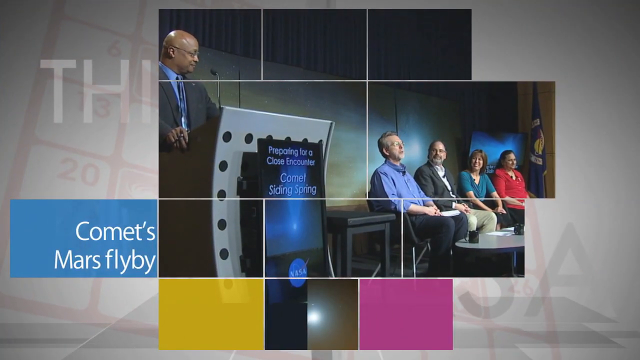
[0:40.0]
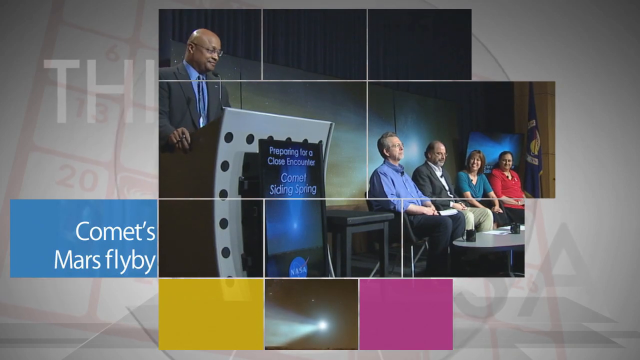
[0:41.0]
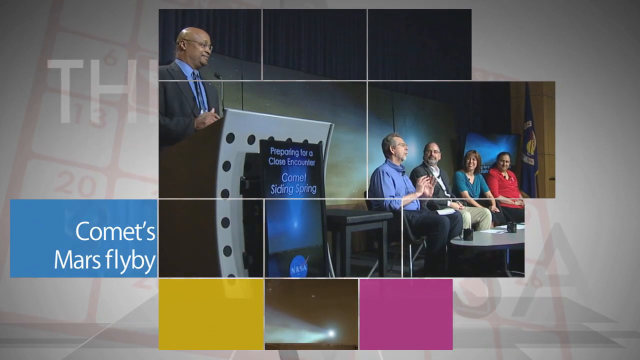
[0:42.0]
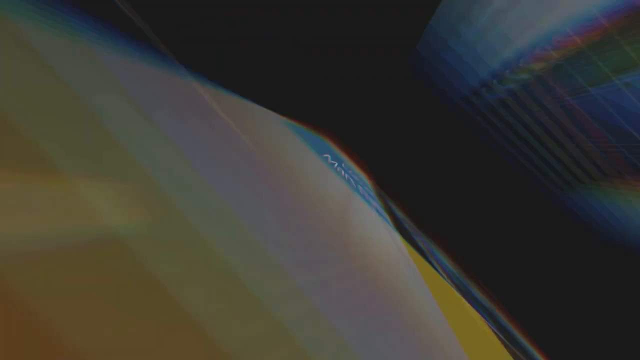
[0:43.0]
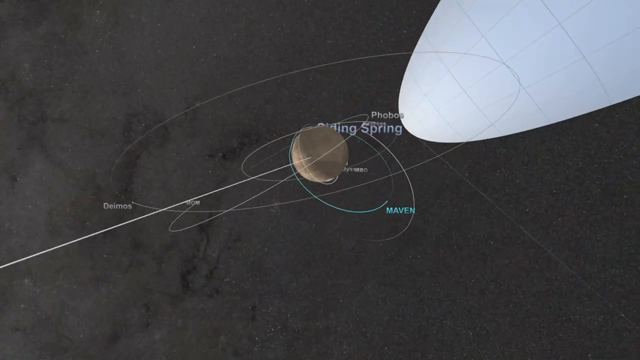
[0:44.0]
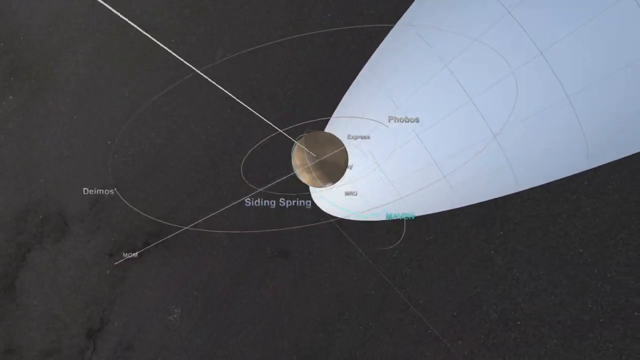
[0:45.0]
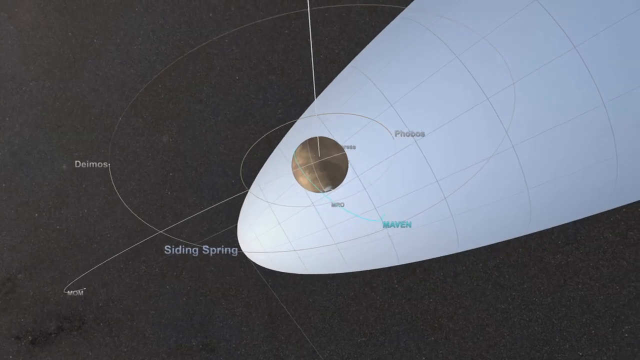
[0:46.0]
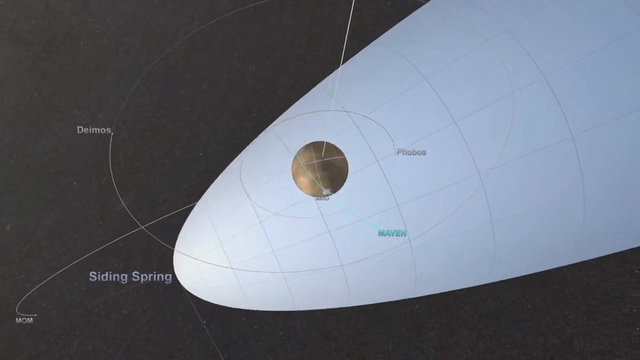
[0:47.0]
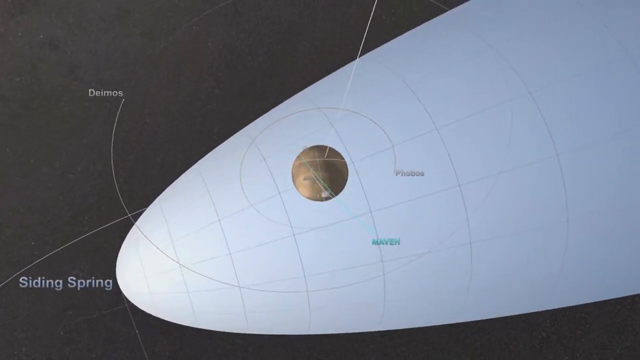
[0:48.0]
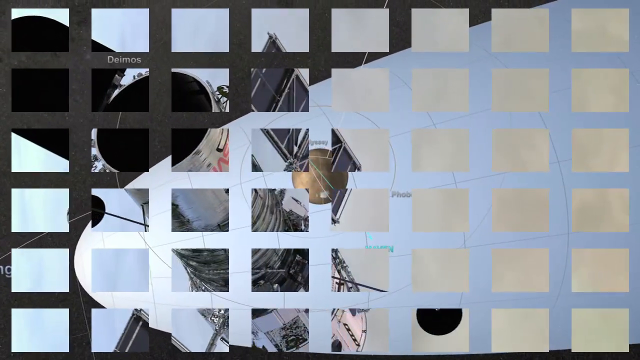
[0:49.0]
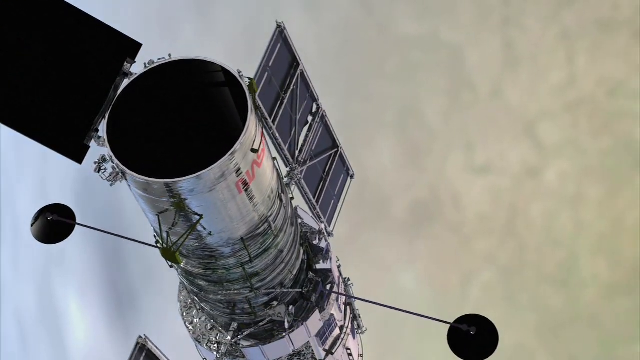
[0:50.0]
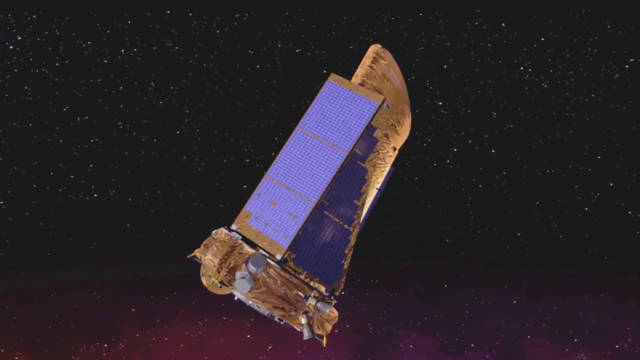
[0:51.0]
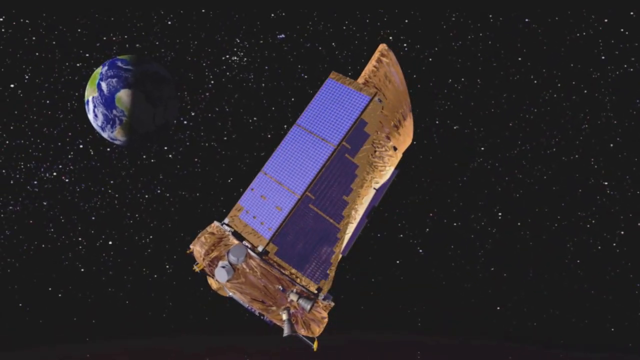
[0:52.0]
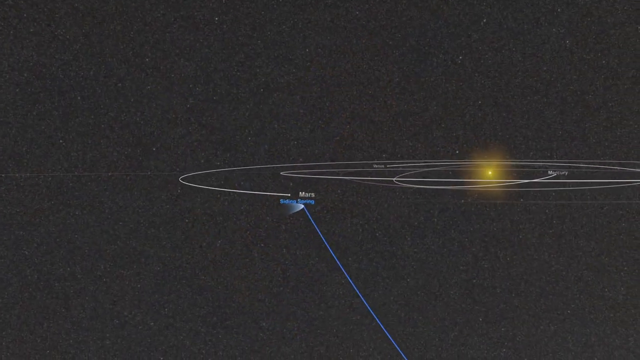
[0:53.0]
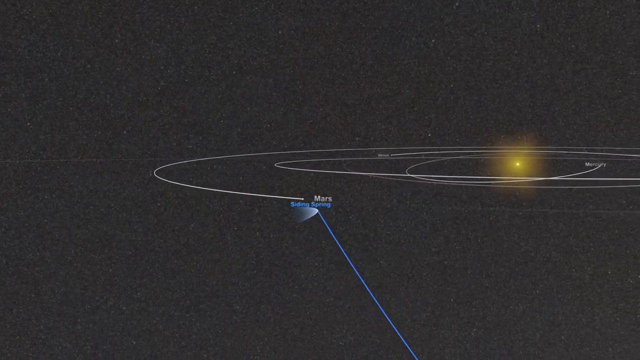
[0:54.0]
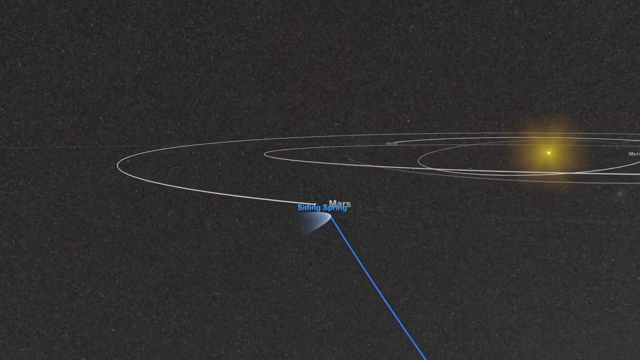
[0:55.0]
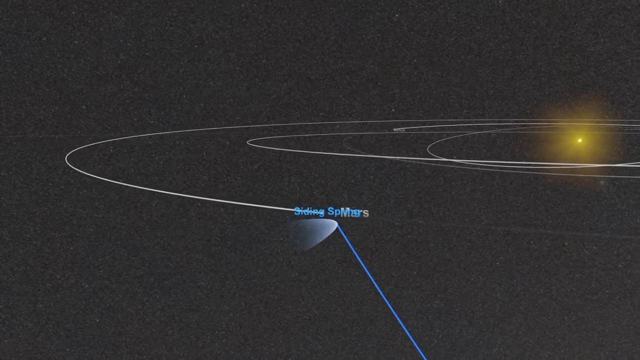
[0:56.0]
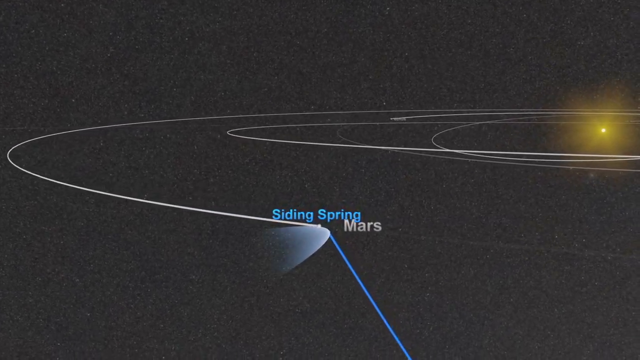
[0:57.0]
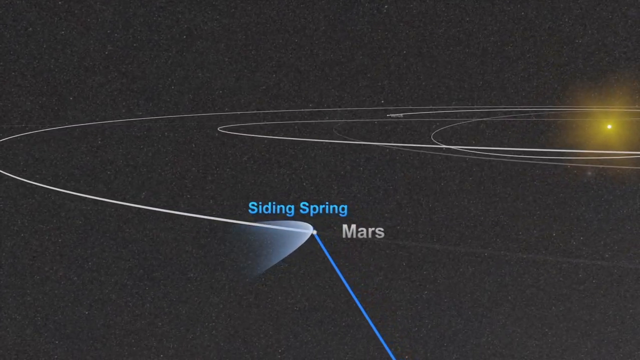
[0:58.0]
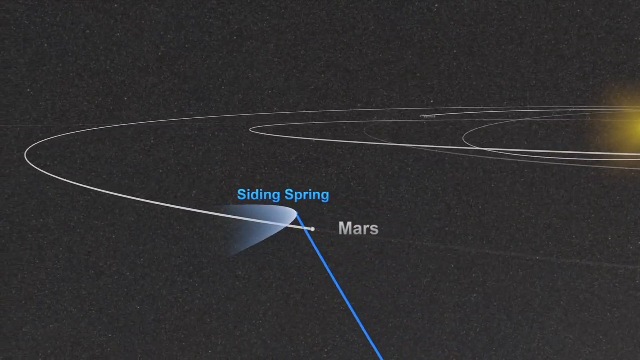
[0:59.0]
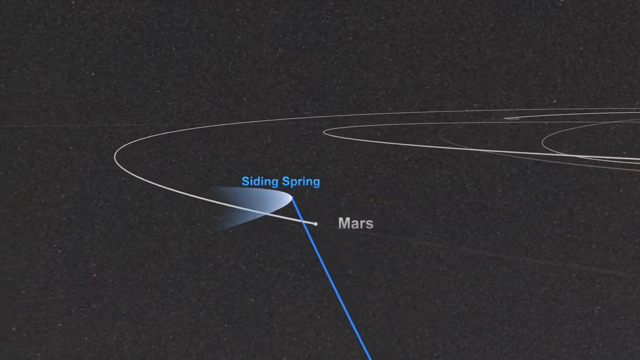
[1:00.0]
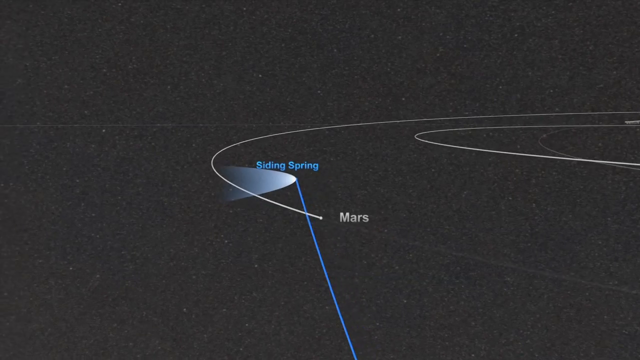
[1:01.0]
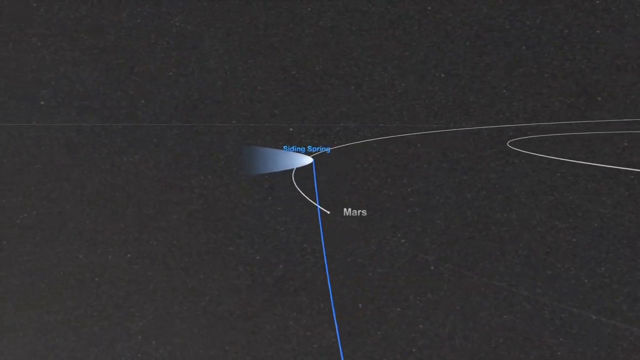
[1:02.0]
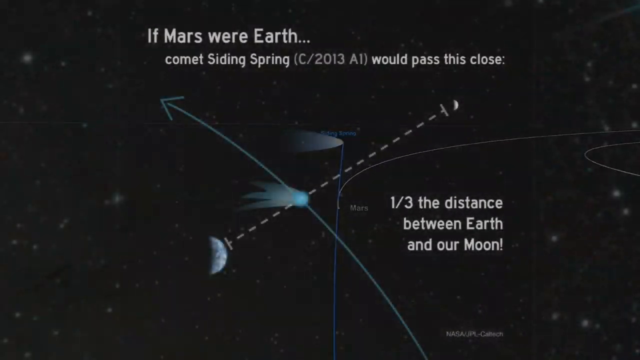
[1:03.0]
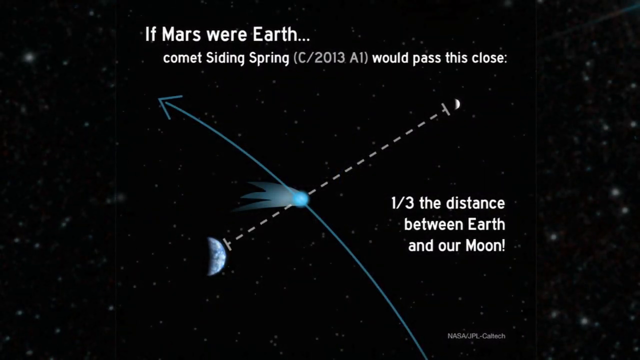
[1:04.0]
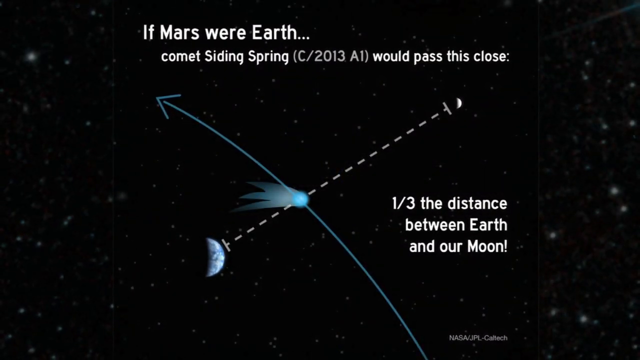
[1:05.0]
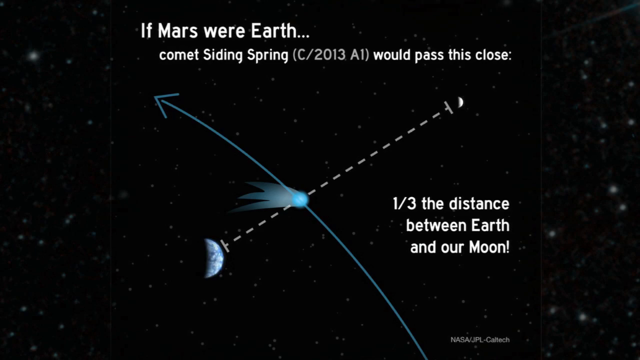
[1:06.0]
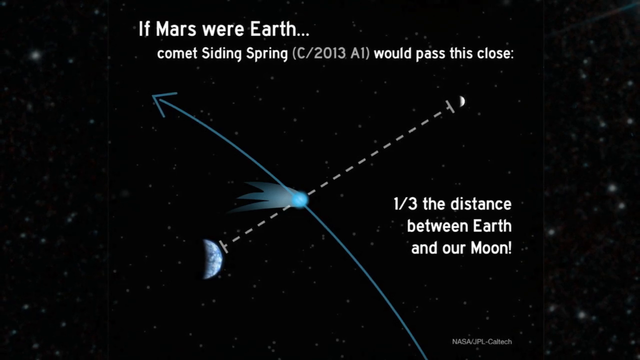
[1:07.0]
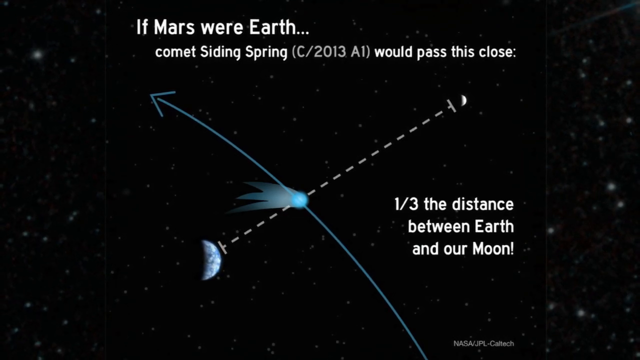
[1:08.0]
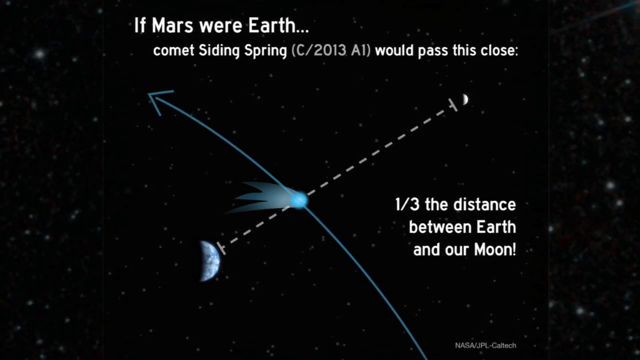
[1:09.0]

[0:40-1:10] A gray background shows a very transparent, calendar-like image with the letters T-I-H, hard to see because pictures are superimposed on top. A panel of four people, two men and two women, sits at the front of a room with a little coffee table in front of them holding some coffee mugs, and there appears to be a flag to their right. A black man in a suit and glasses stands at a podium. The text reads "Comets Mars fly by", and the screen in front of the podium has a NASA logo at the bottom and reads "preparing for a close encounter, comet Sighting Spring". The people in the chairs appear to start talking. A graphic simulation of the comet follows, with orbits outlined around a ball that is probably the comet, moving through space. Next comes a picture of different satellites or space stations, showing Mars, the solar system and the comet, with text reading "if Mars were Earth, comet Sighting Spring would pass this close" and "a third the distance between Earth and our moon".